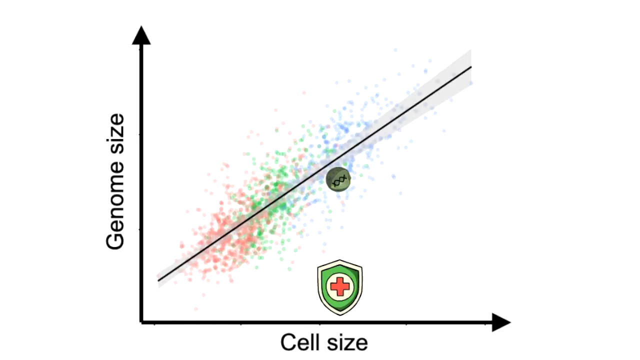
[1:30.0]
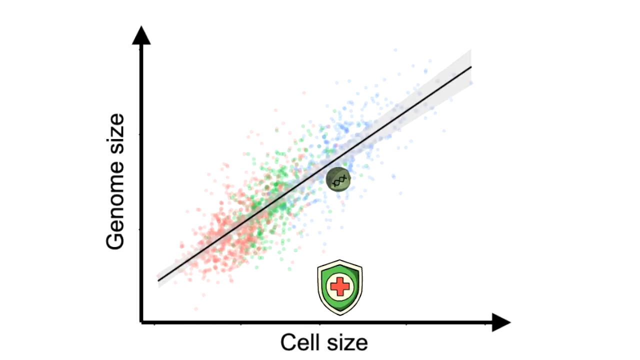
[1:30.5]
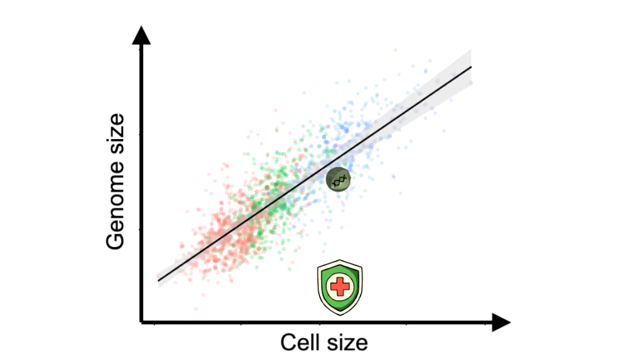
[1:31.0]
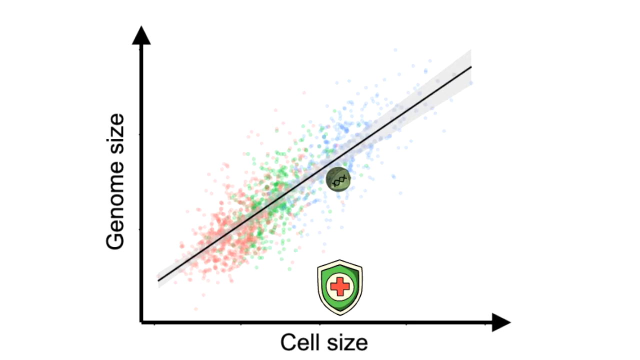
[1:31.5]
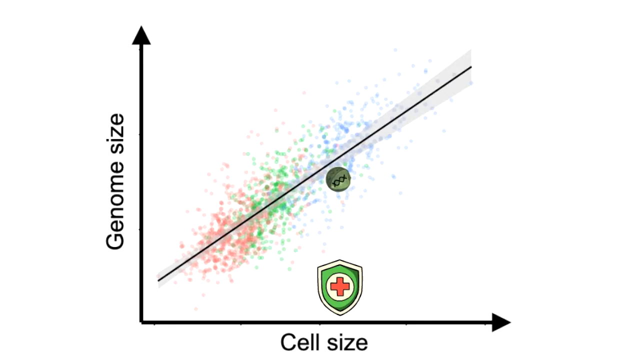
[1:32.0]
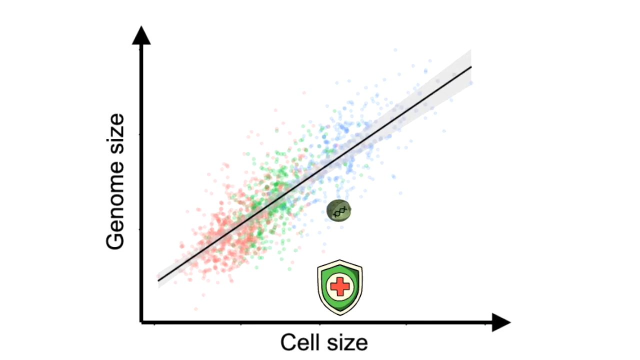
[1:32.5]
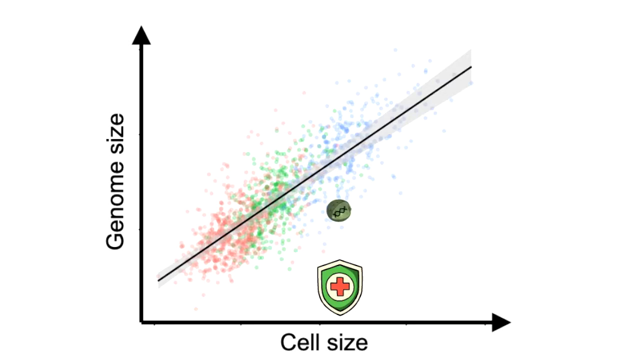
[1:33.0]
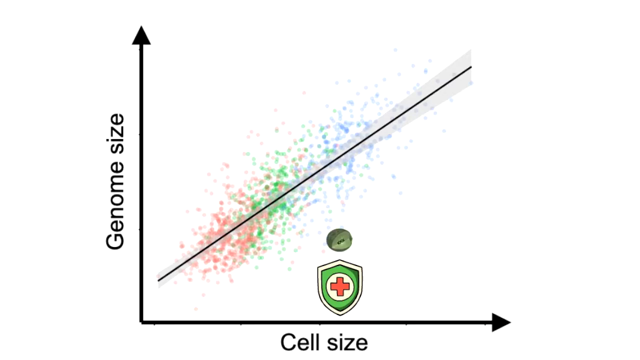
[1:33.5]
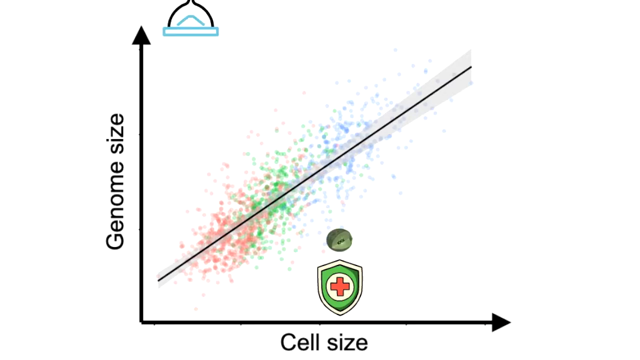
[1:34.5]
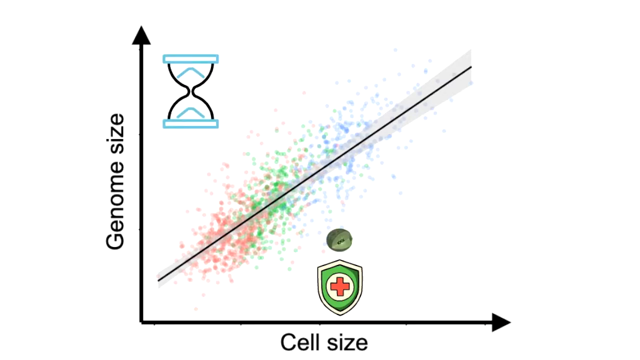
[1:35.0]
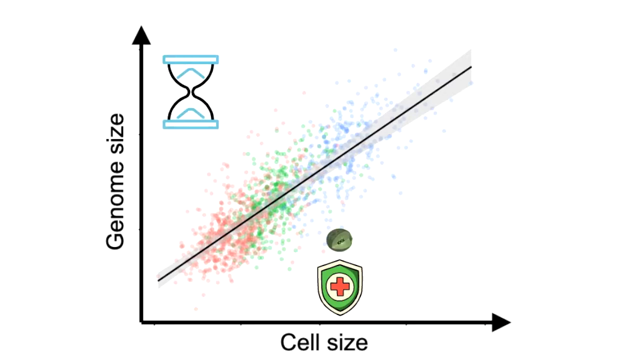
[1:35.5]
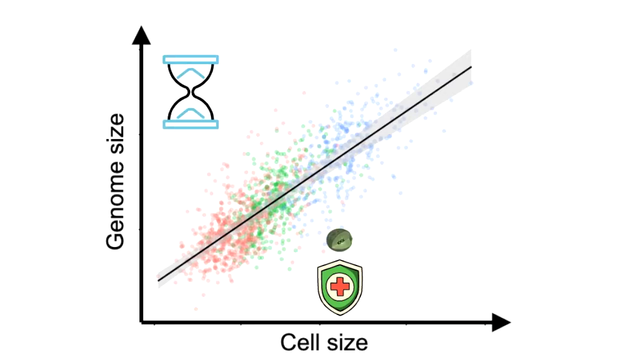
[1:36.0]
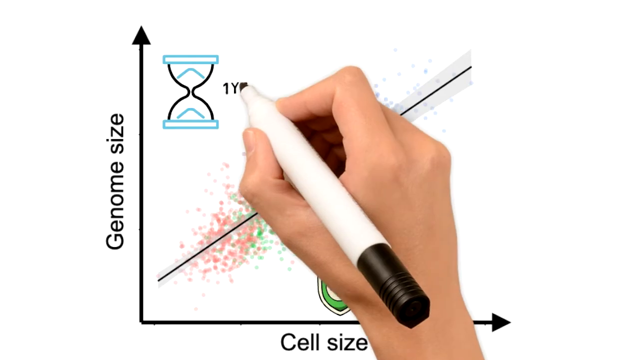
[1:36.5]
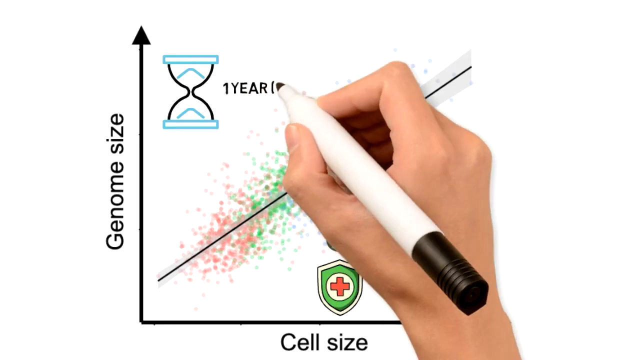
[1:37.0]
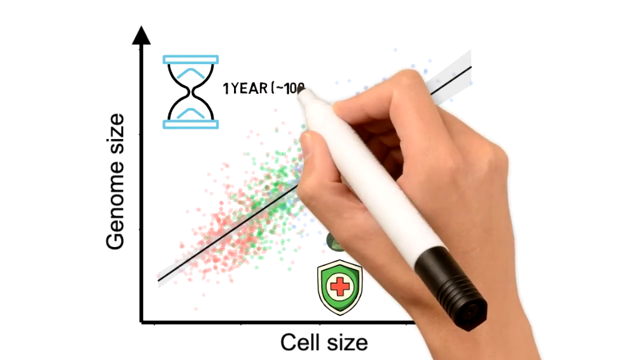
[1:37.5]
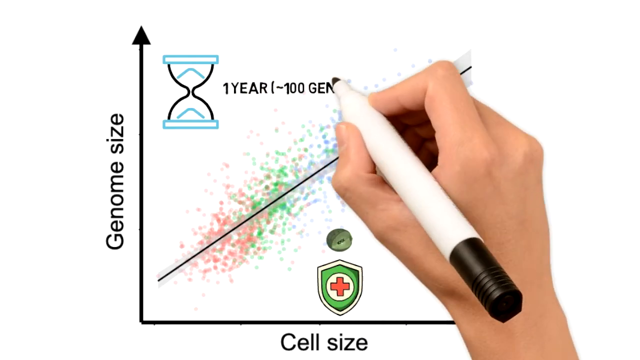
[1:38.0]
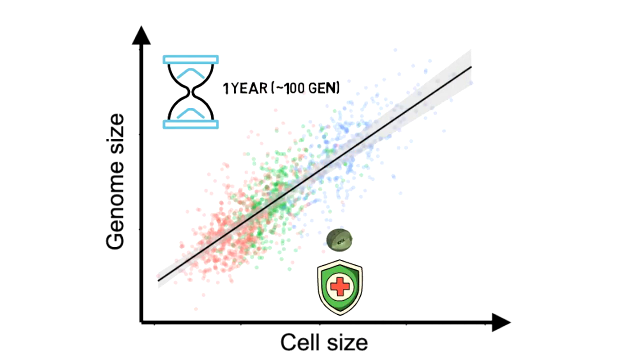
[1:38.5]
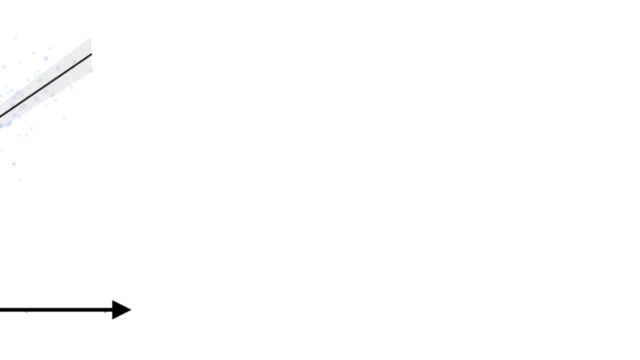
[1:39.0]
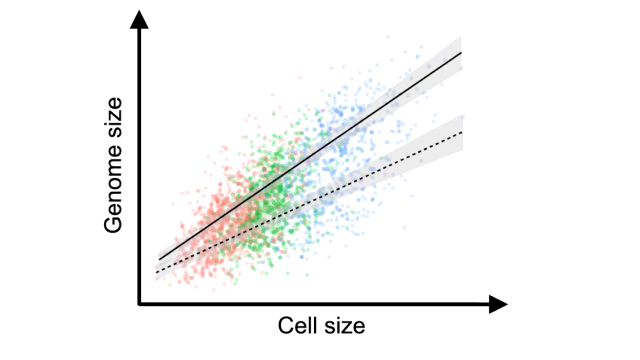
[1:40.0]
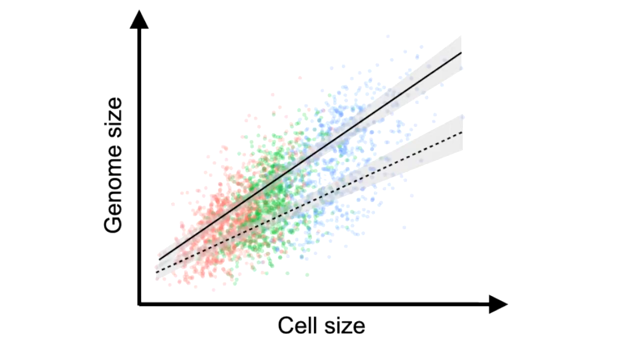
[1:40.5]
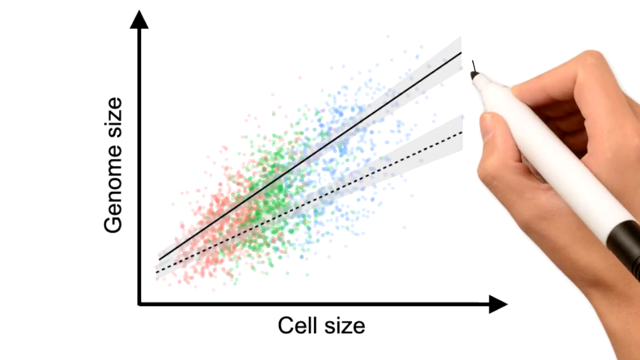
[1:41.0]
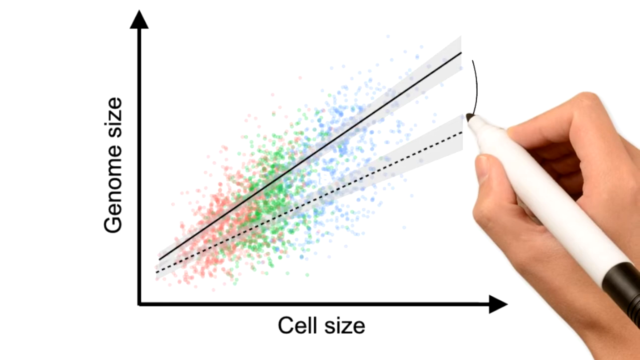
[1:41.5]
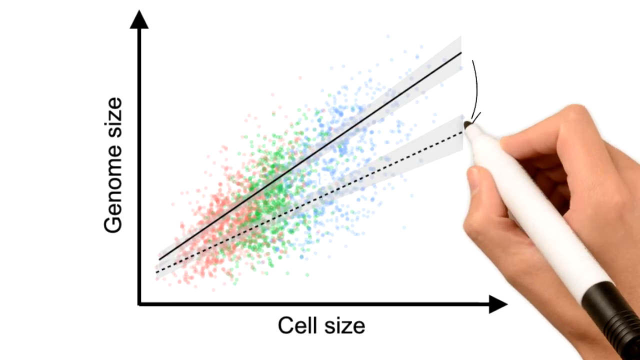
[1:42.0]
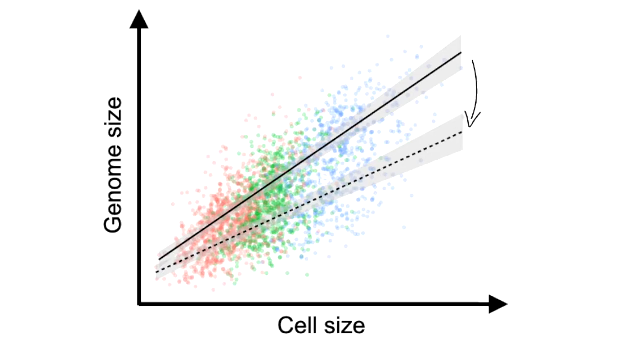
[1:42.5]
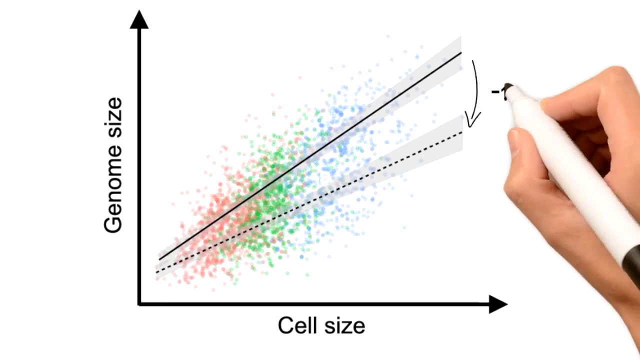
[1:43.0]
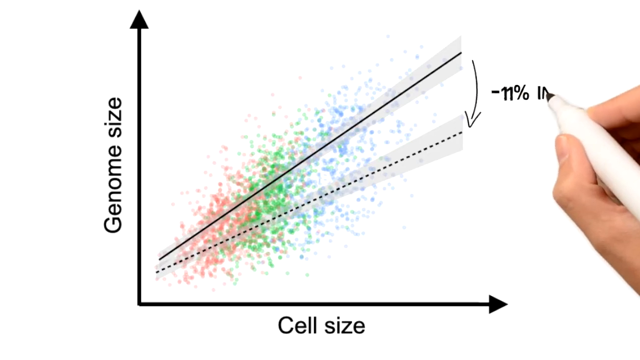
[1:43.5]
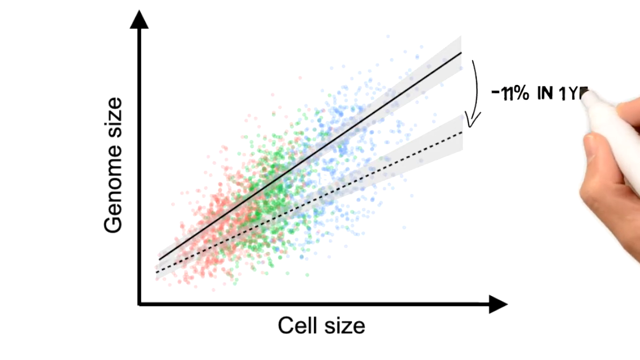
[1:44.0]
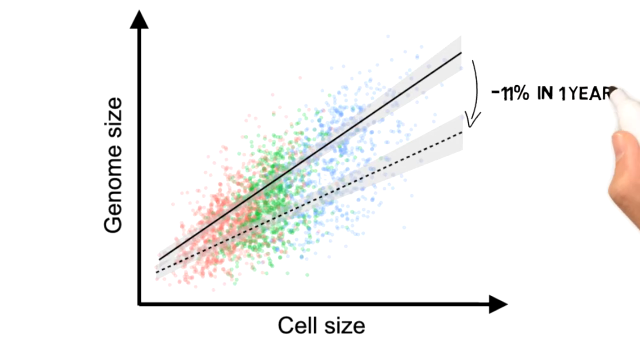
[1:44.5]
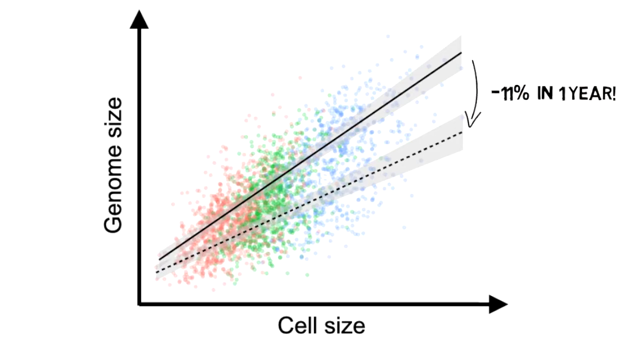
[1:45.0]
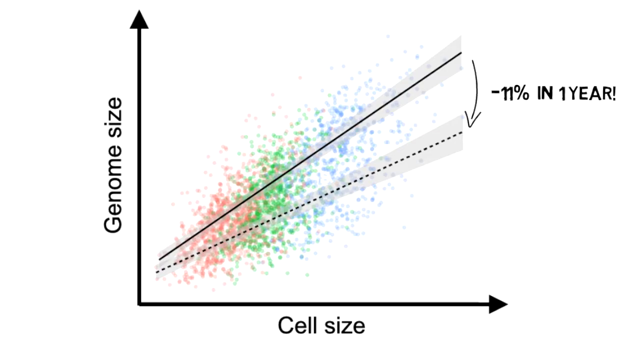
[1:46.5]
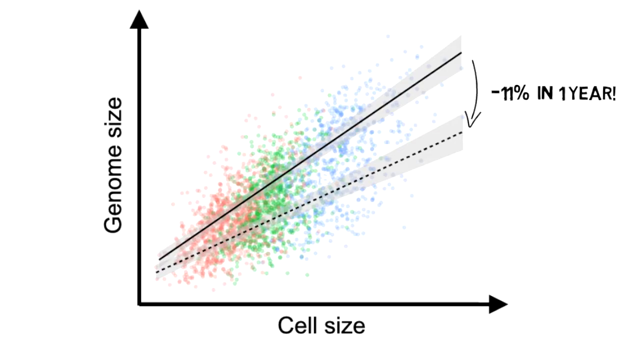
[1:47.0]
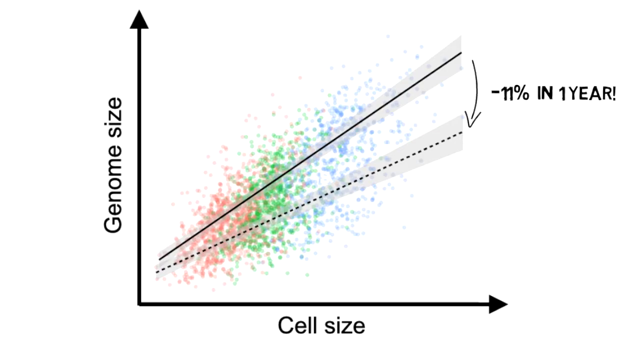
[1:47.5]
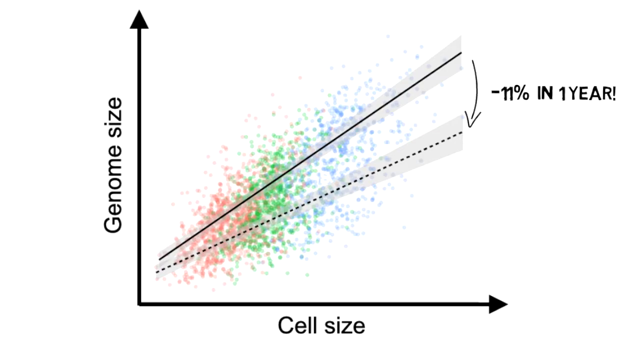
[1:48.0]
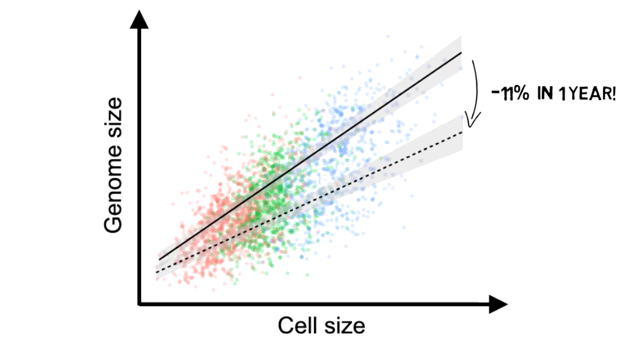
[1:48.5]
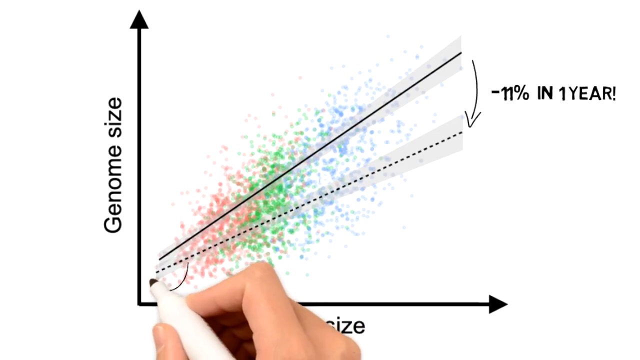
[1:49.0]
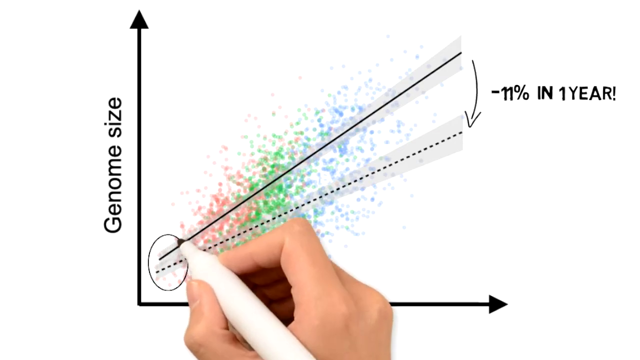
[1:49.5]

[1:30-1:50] On a white screen, a black arrow on the left side points toward the top of the screen. Its line runs down to the bottom and makes a 90-degree angle to the right. To the left of this line is "genome size", below the bottom line is "cell size", and above the line is a green shield with a red cross. Inside the corner of the angle, a line runs from the bottom left to the top right, and there is a picture of a green cell. Lots of pink dots are around the bottom left of this line; they turn green in the middle and blue at the top right. A hand draws an hourglass in the top left of the image, and a dotted line appears. A person's right hand holding a marker draws a line between the dotted line and the solid line, then writes "minus 11%" next to it.